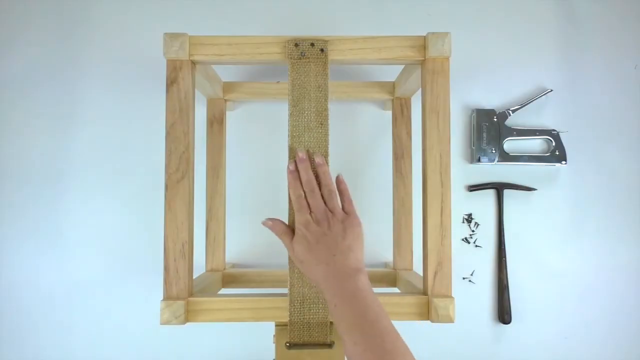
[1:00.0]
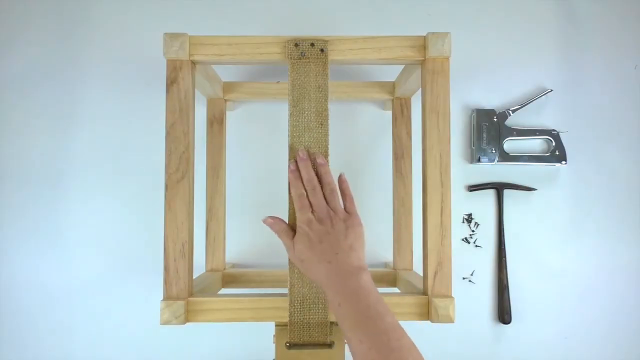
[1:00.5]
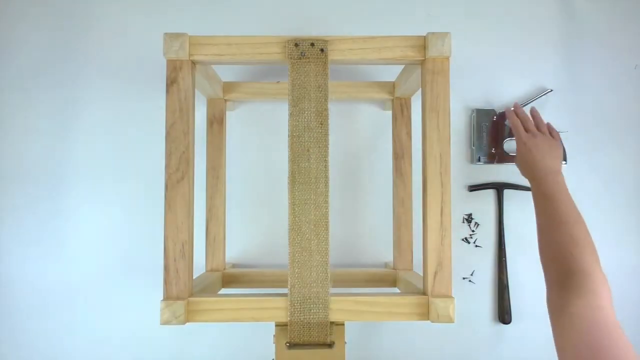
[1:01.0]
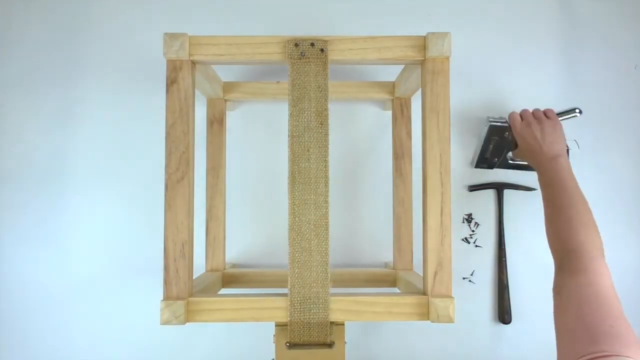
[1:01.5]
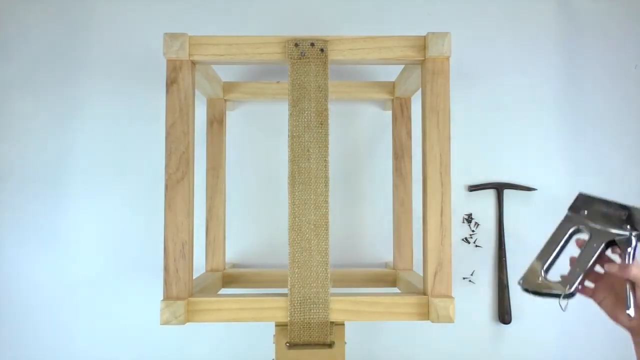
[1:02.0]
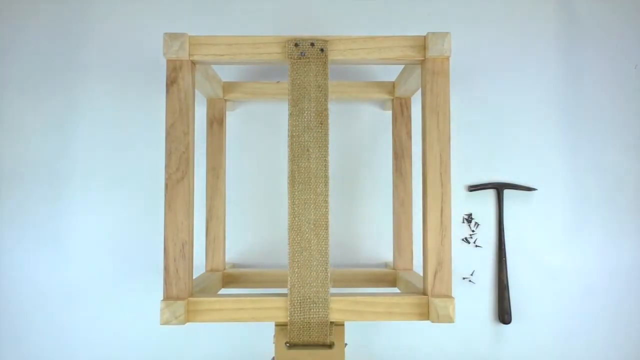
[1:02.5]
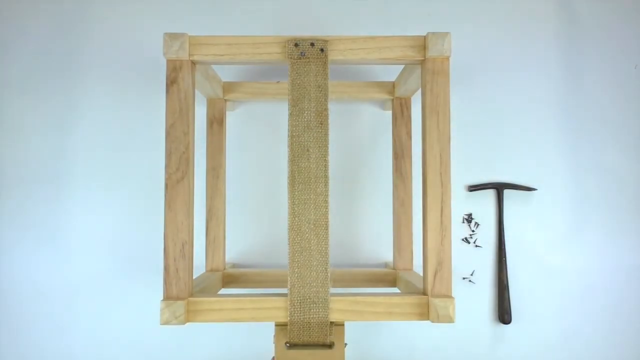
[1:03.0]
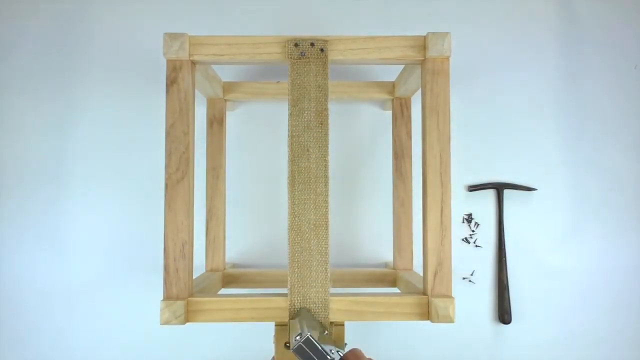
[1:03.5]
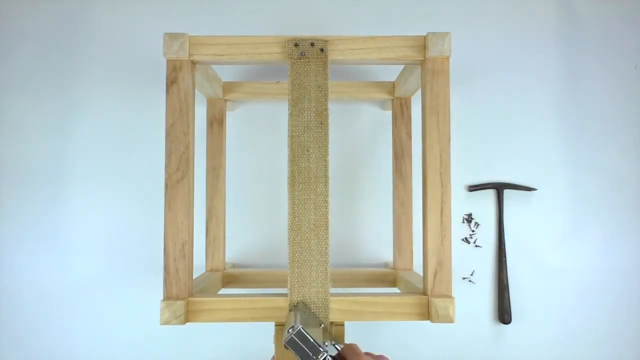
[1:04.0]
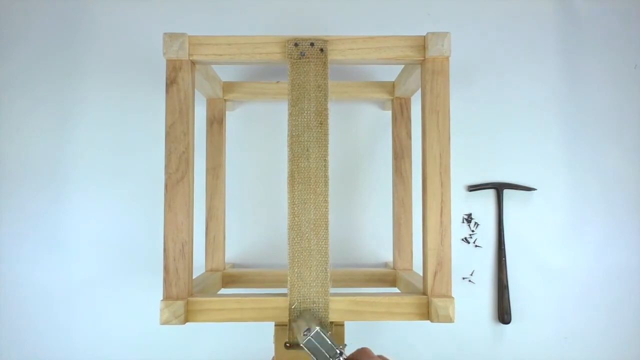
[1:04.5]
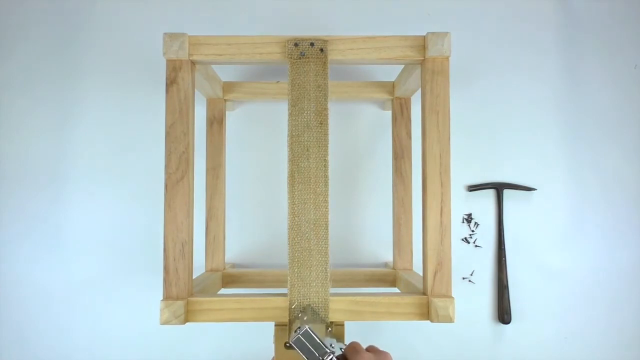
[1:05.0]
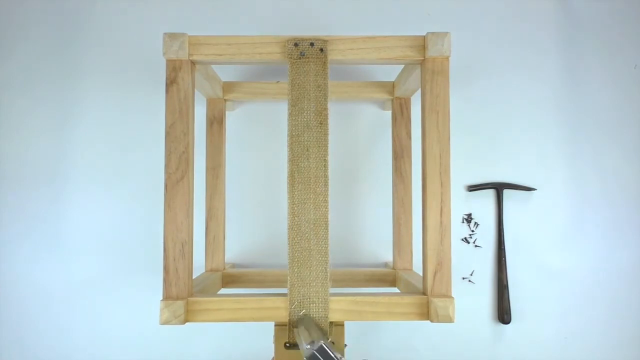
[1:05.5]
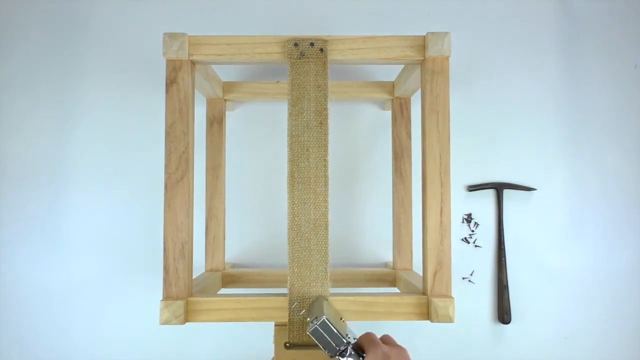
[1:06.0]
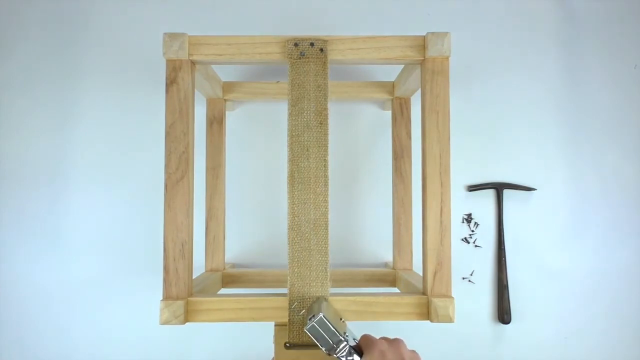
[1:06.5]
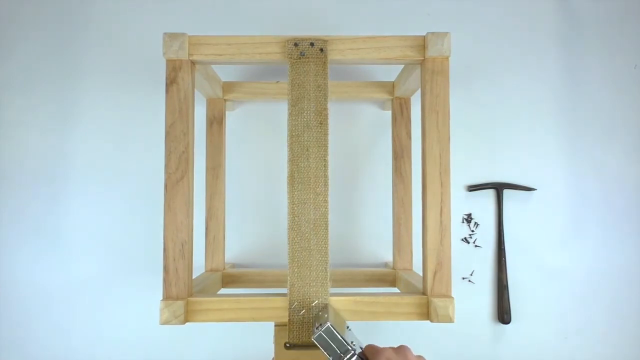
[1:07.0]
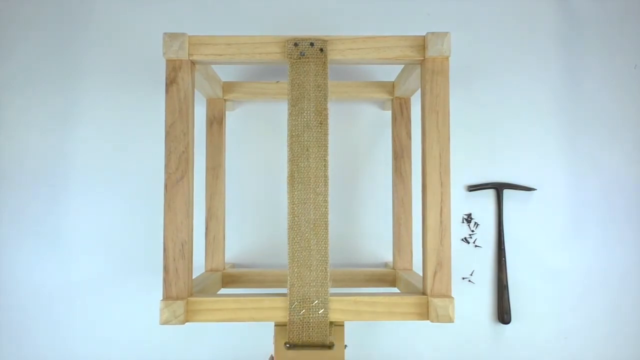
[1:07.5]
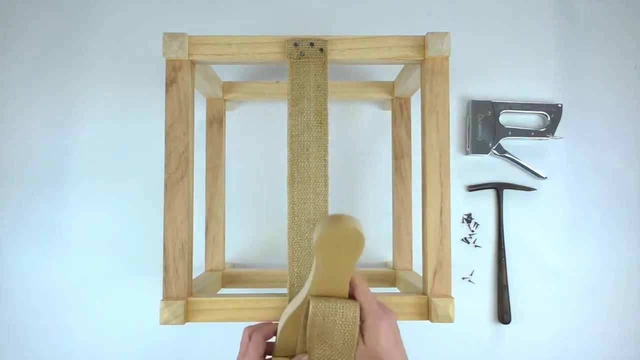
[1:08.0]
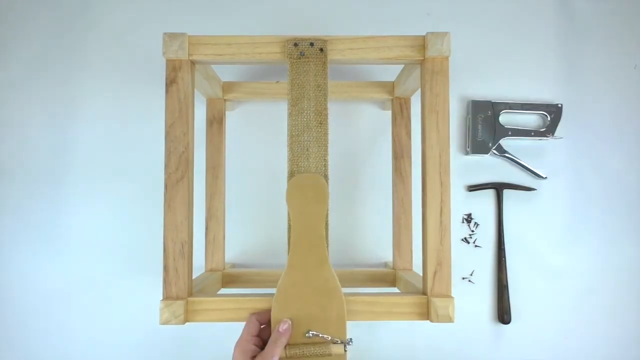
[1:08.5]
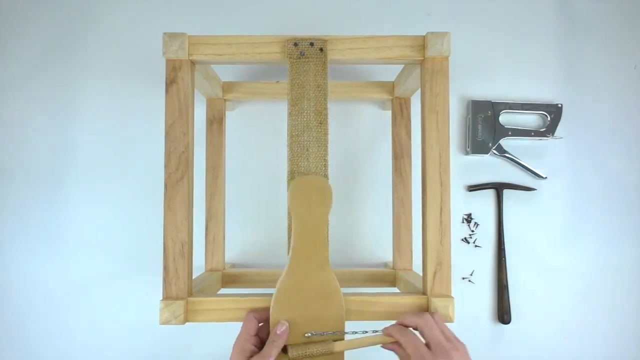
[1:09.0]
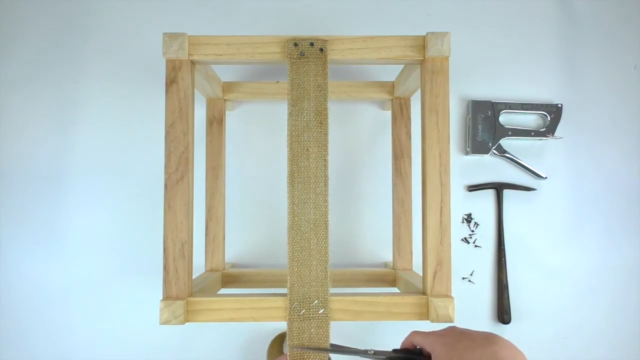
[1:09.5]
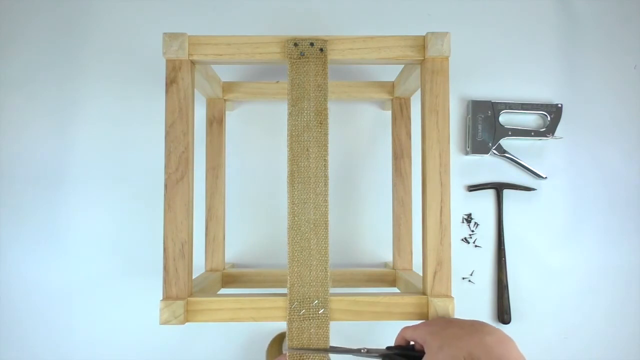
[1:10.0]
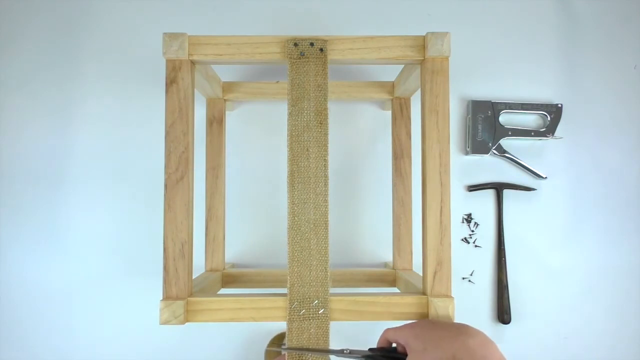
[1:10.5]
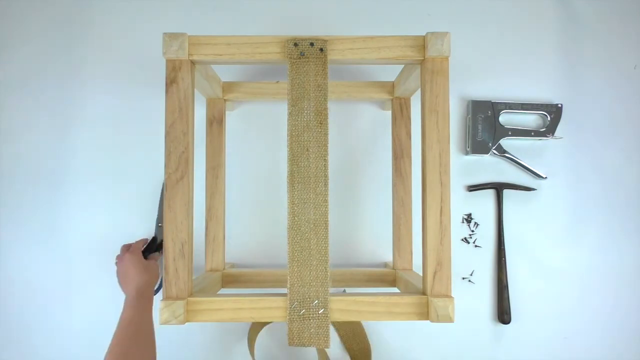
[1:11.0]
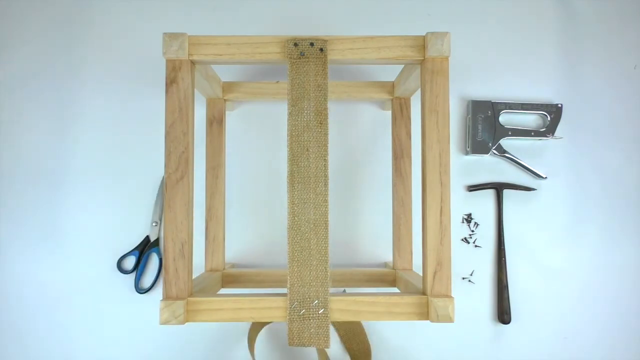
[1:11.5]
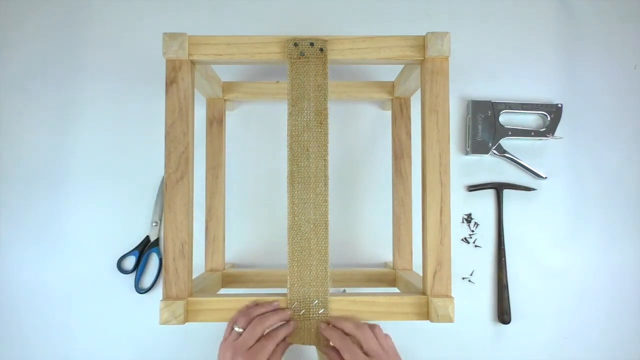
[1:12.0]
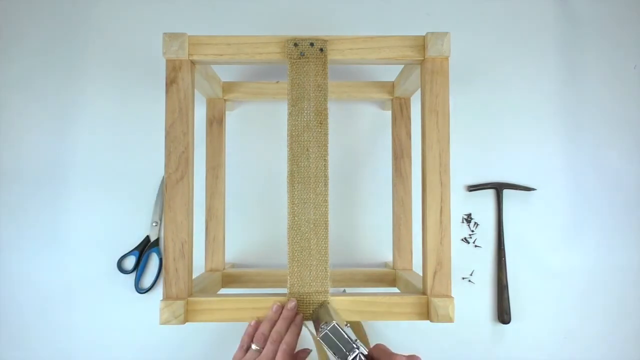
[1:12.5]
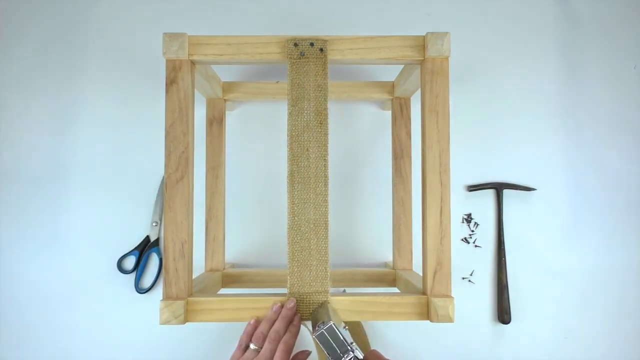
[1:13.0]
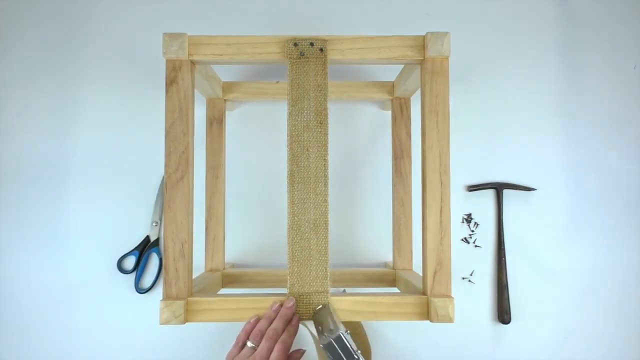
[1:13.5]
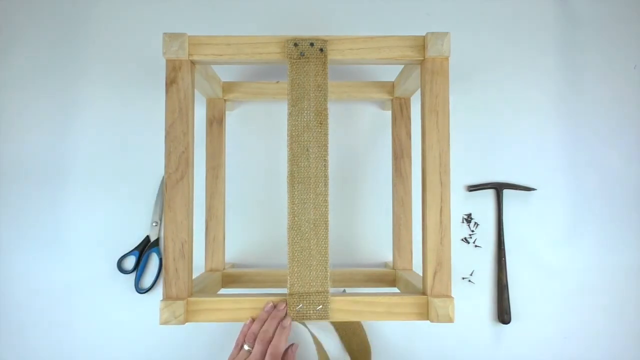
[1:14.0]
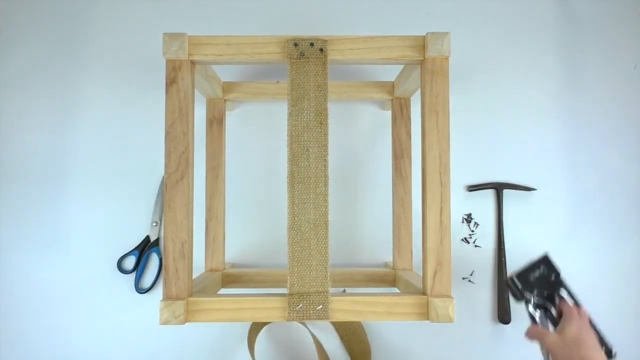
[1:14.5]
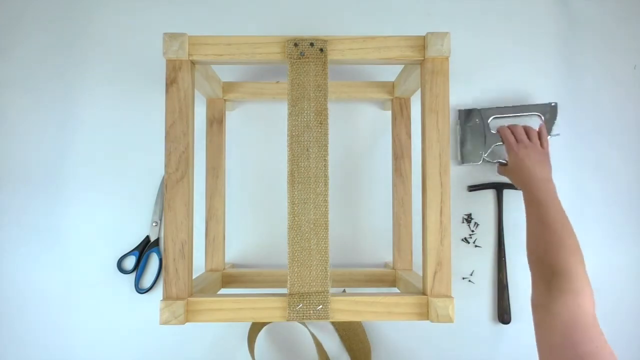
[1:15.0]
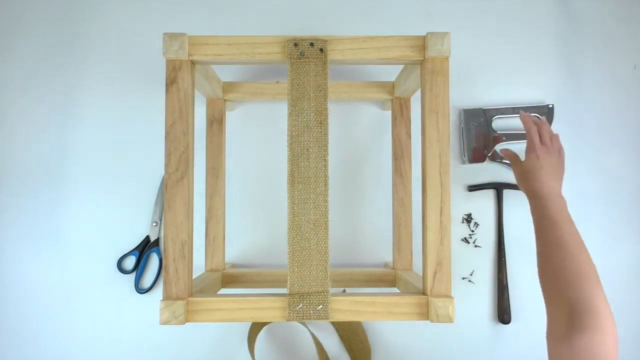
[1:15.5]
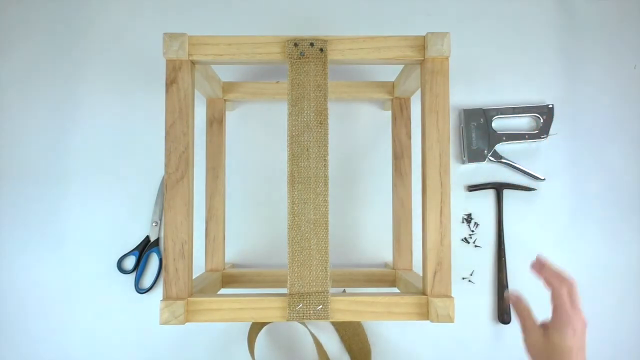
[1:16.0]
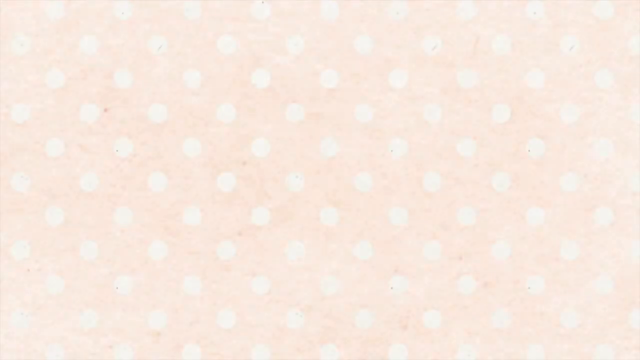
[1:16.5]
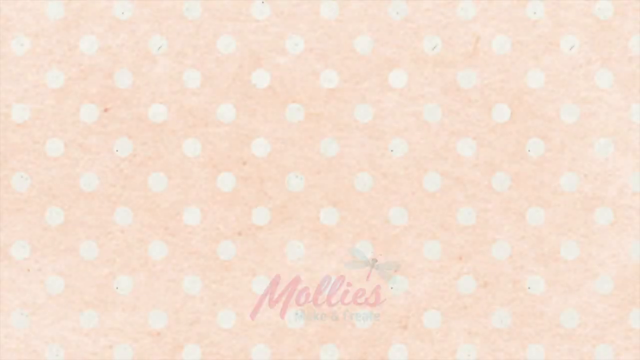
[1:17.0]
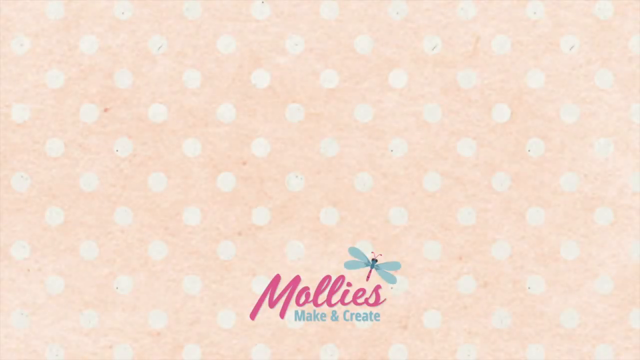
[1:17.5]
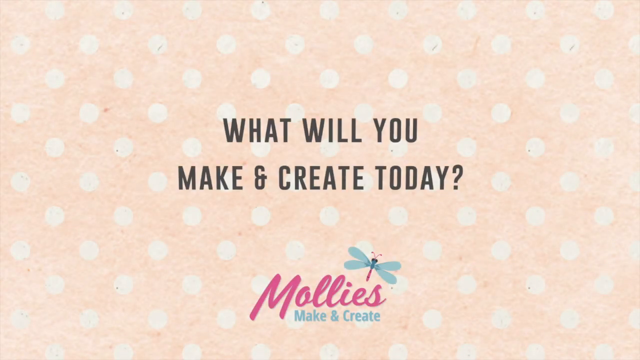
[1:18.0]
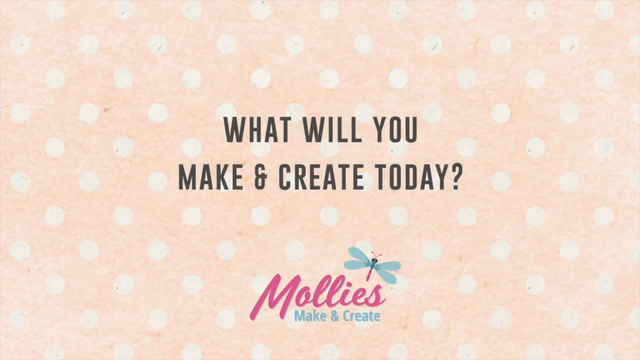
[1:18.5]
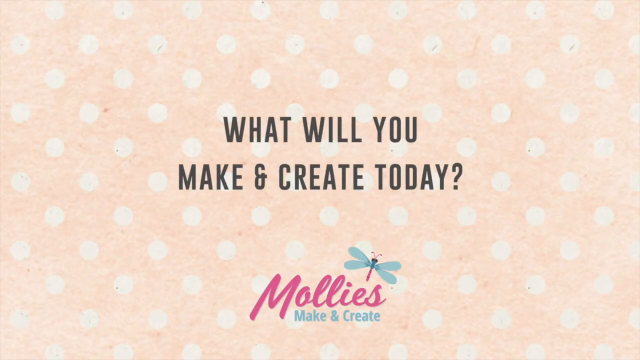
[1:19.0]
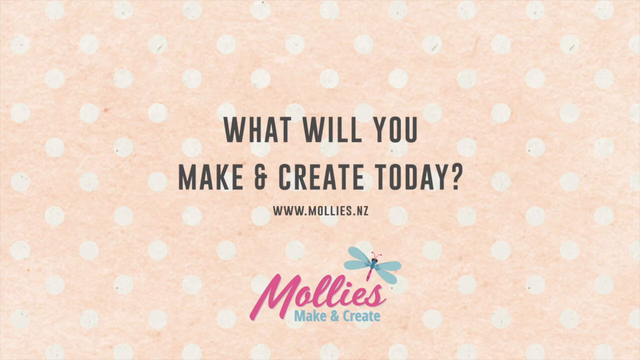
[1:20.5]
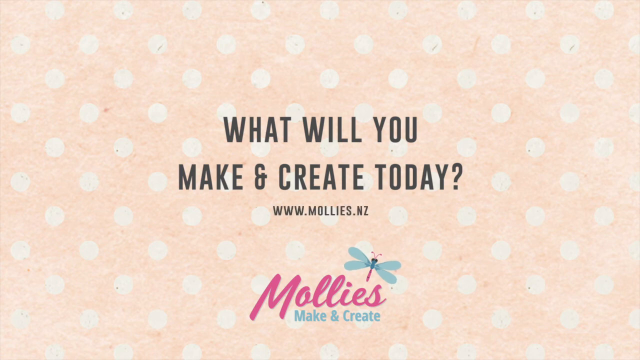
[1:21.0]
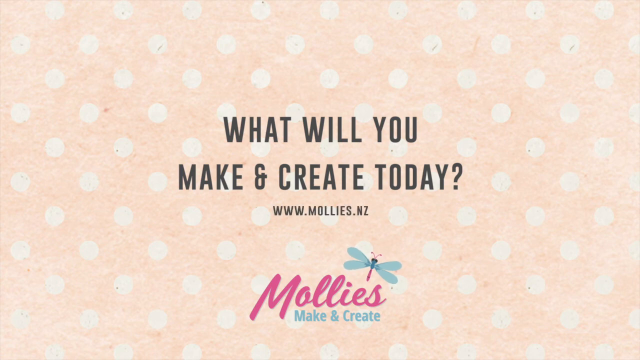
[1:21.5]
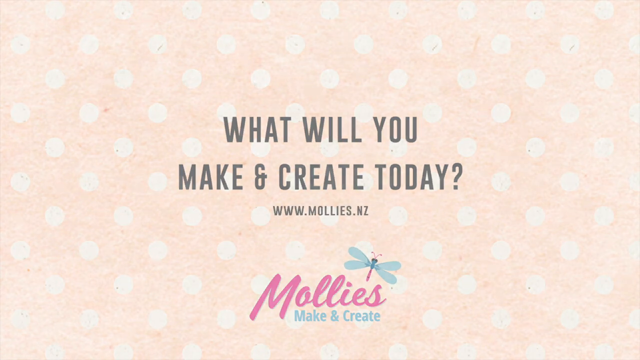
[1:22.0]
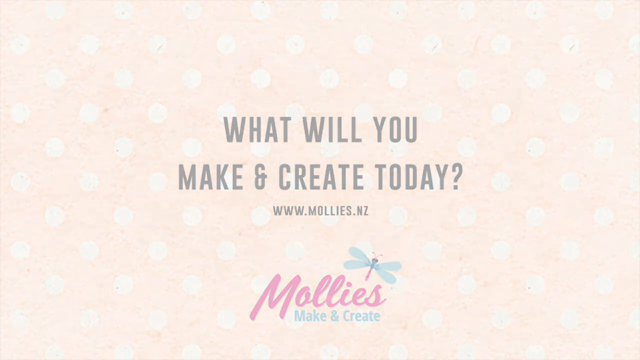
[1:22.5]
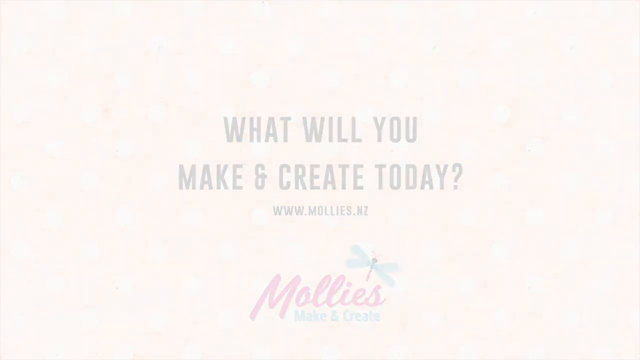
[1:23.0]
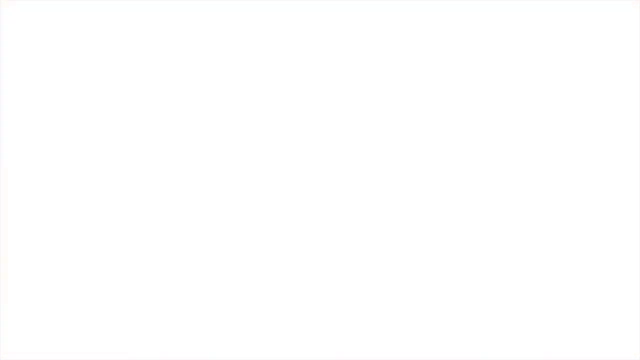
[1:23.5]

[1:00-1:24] Someone is creating some sort of wooden box, and the way the box is pieced together is visible. On the white surface below it are tools being used: a heavy-duty stapler, a hammer of some sort, and what appear to be some small nails. A type of ribbon on the box has been nailed into the side. Someone uses a small wooden piece and adds some scissors to the floor beside them. The background then changes to a cream color with white polka dots, and black letters read "What will you make and create today?" At the bottom is the word "Mollies" with a picture of a dragonfly, and below it the text "Make and create." A web address is added at the end.